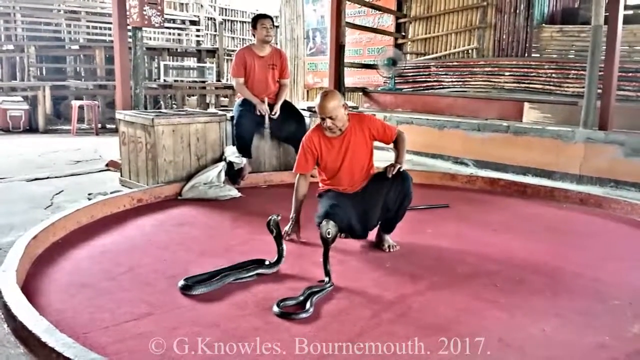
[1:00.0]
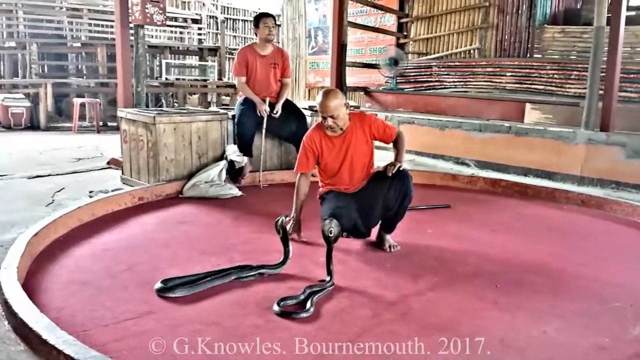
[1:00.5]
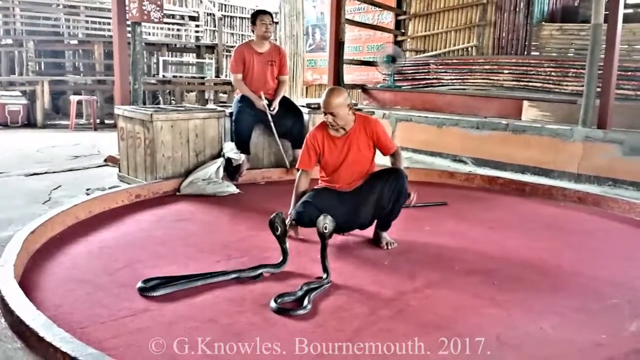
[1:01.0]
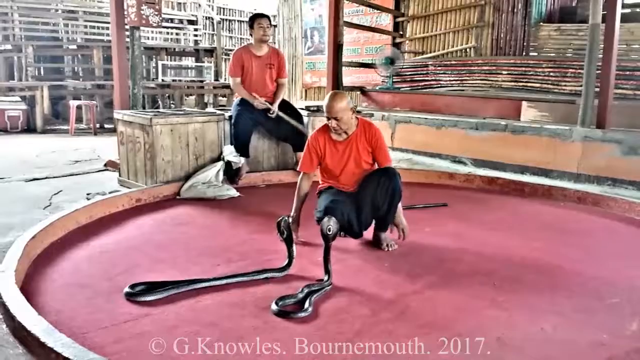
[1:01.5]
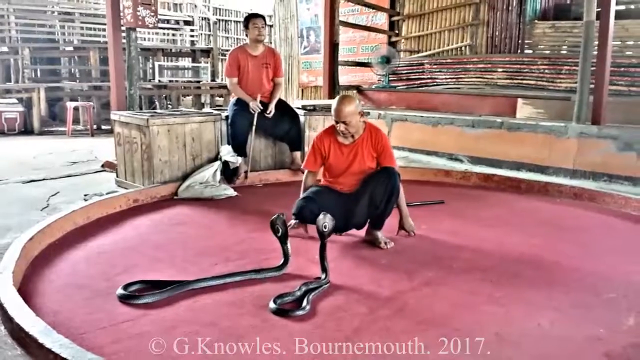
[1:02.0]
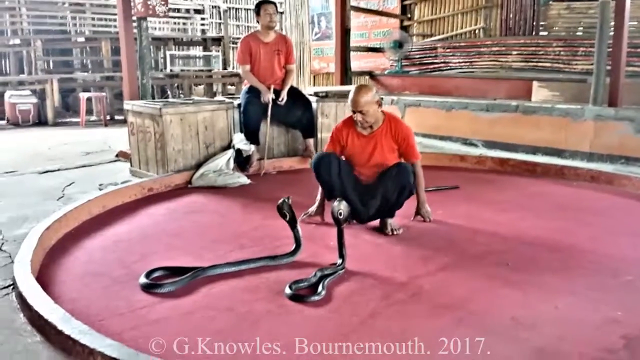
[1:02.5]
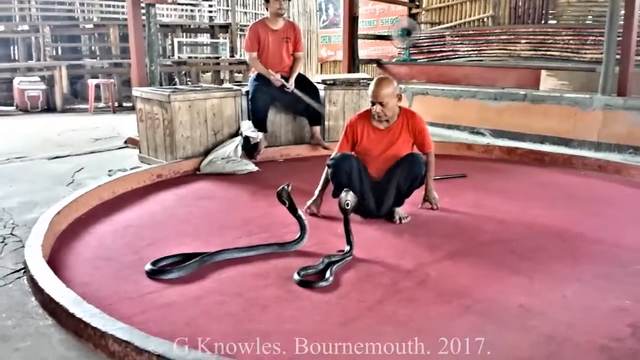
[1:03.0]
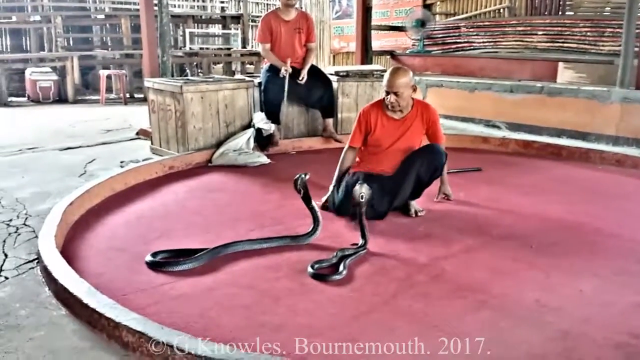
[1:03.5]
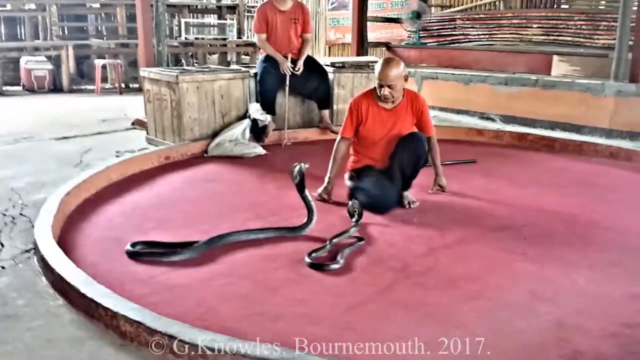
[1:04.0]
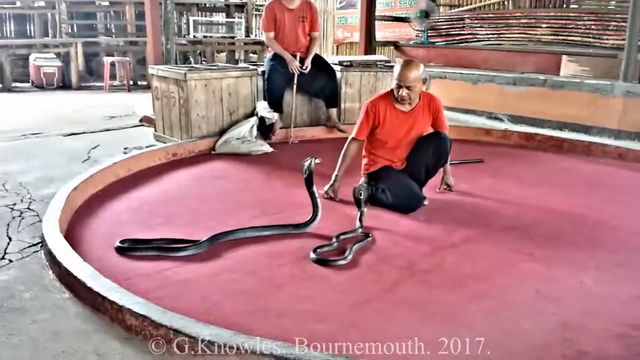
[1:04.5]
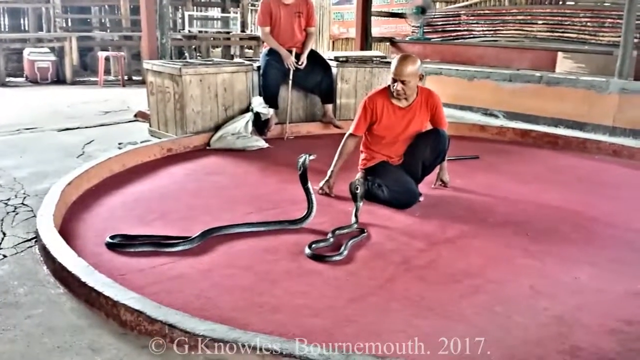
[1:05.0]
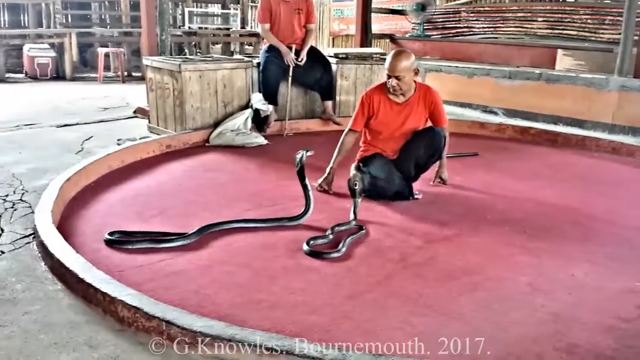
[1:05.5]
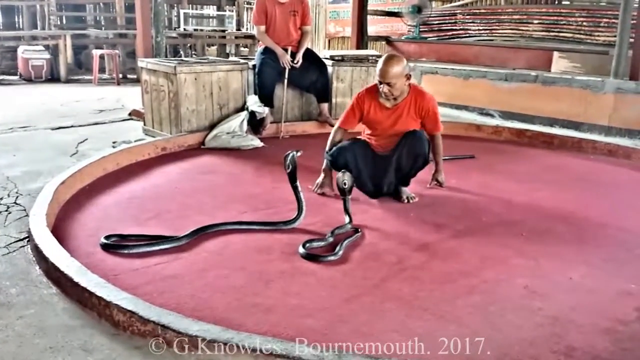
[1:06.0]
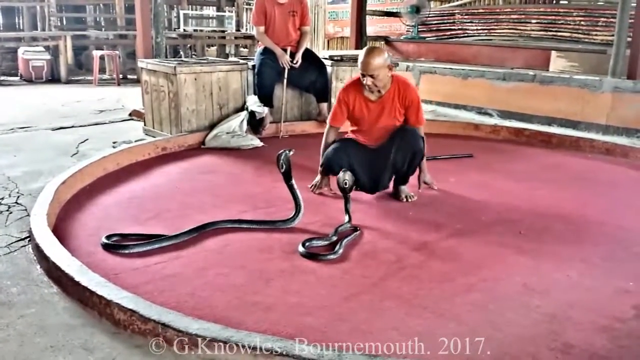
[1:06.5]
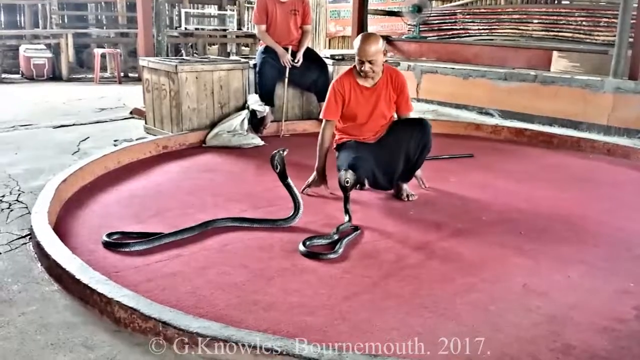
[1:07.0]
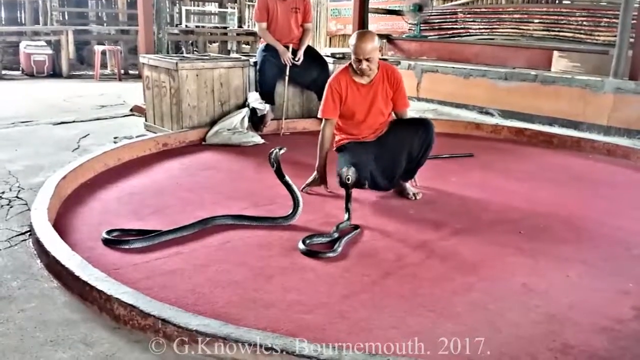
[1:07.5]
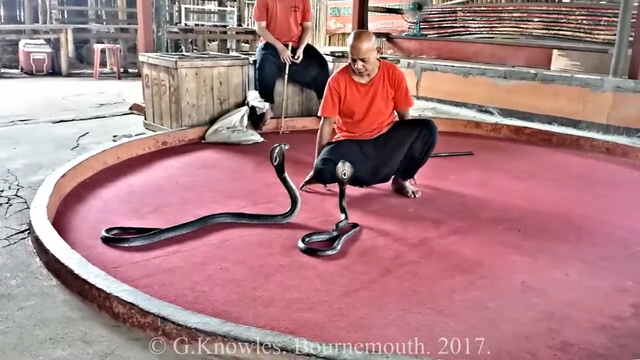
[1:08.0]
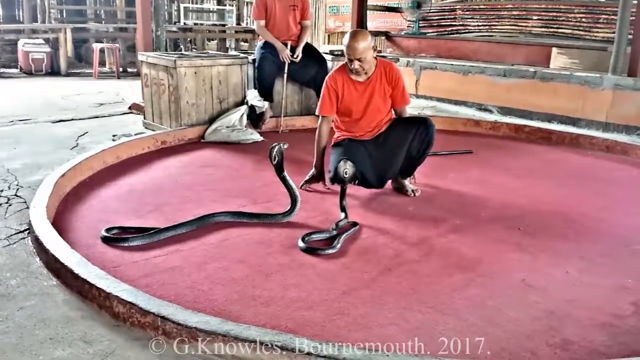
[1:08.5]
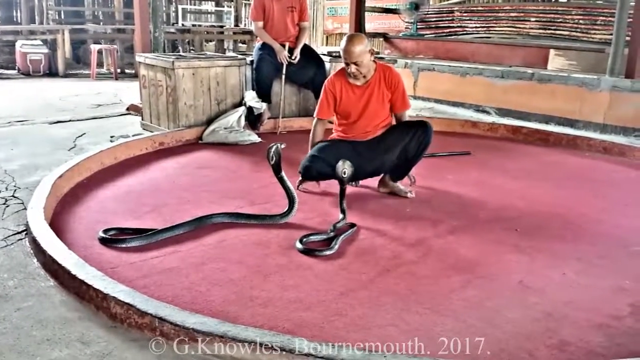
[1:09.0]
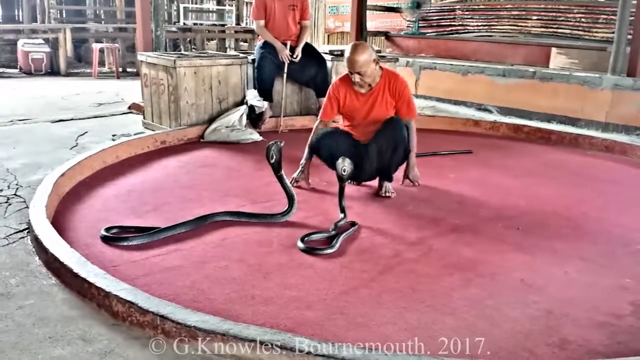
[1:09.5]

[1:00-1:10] The two men are in the pink arena. The snake on the left is stretched out, watching the knee of the squatting man as he moves his knee to attract its attention. He appears to be trying to get the left snake's attention, sort of mimicking the way a snake moves with his knee. The man in the background with the hook is sort of staring off into the distance, not really paying attention to the man in front, and is waving the hook around. The man in front is bald and not wearing shoes. The man in the back has short black hair.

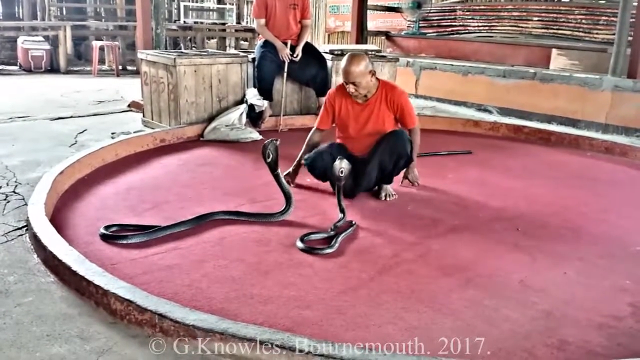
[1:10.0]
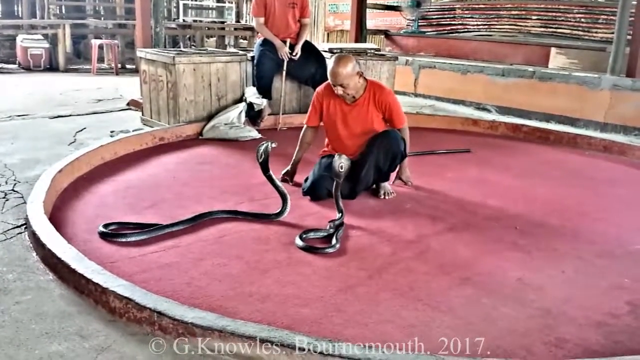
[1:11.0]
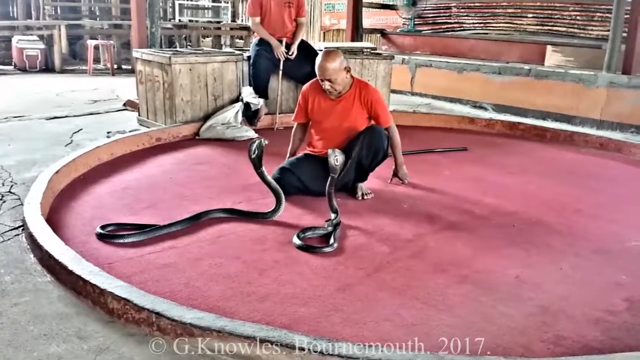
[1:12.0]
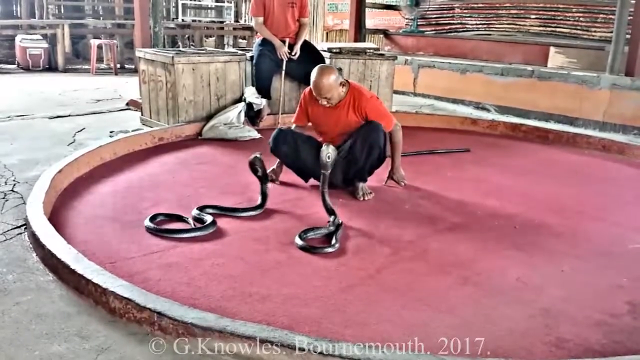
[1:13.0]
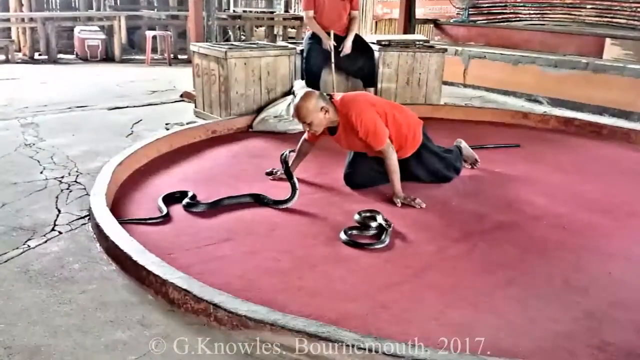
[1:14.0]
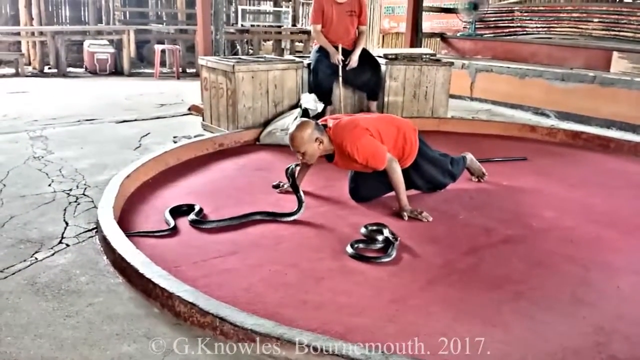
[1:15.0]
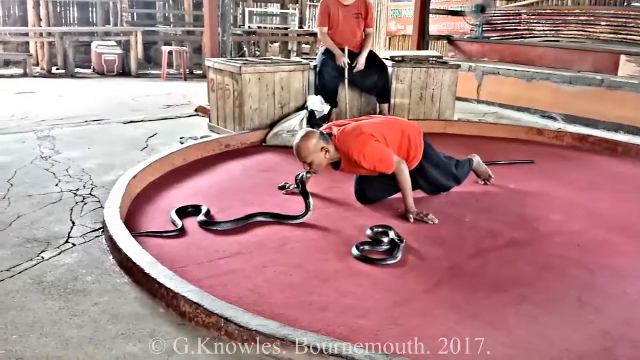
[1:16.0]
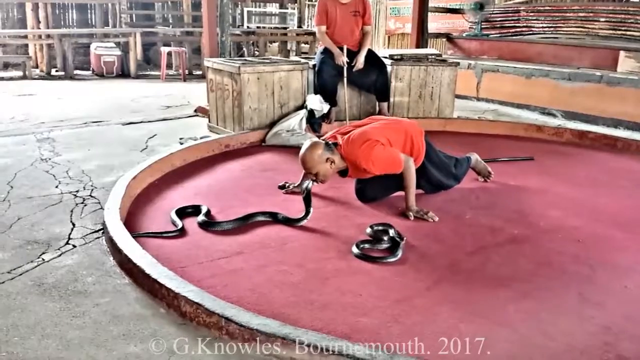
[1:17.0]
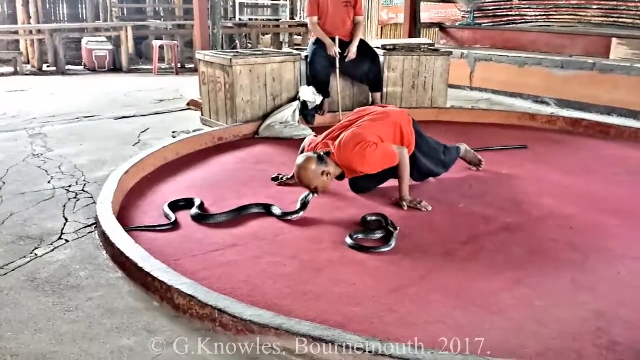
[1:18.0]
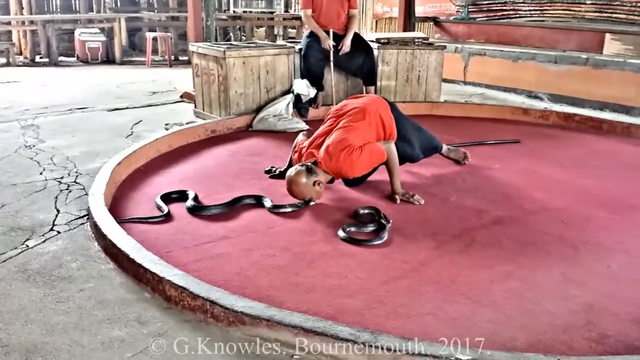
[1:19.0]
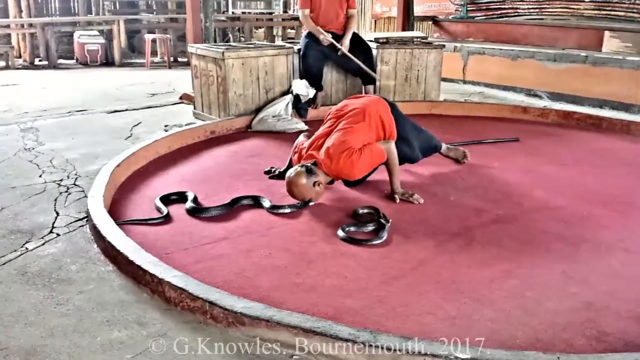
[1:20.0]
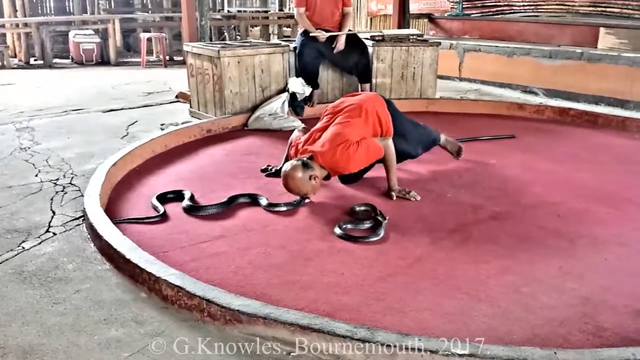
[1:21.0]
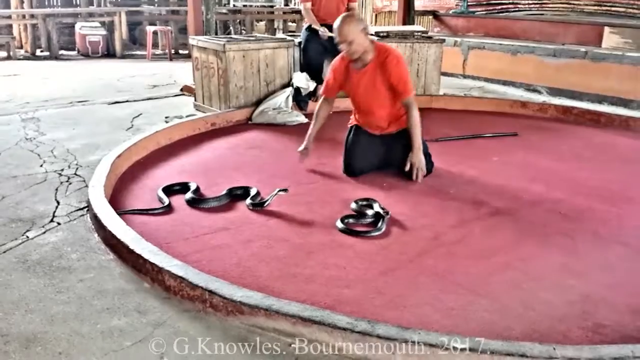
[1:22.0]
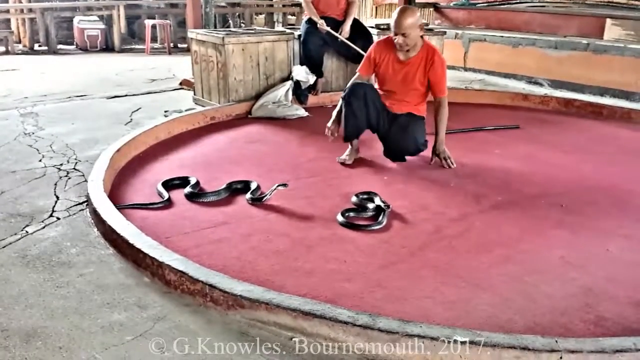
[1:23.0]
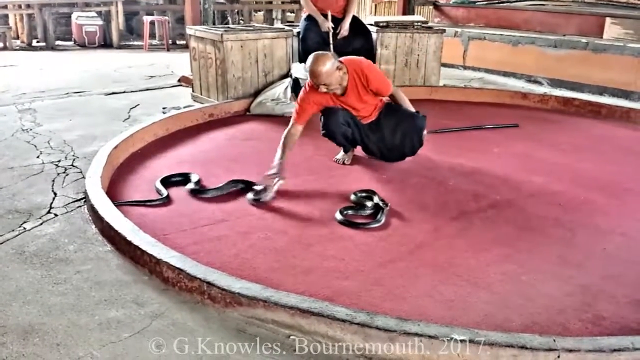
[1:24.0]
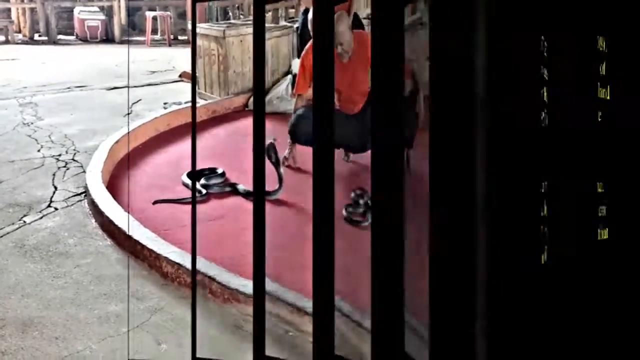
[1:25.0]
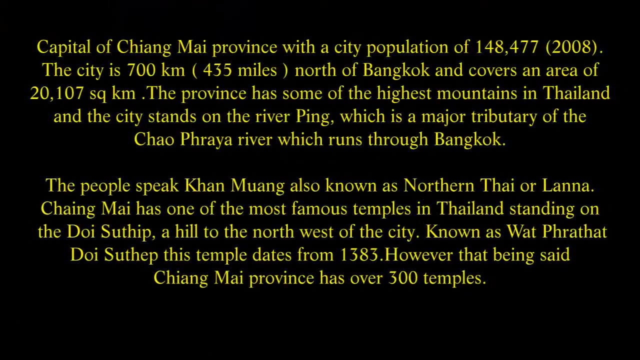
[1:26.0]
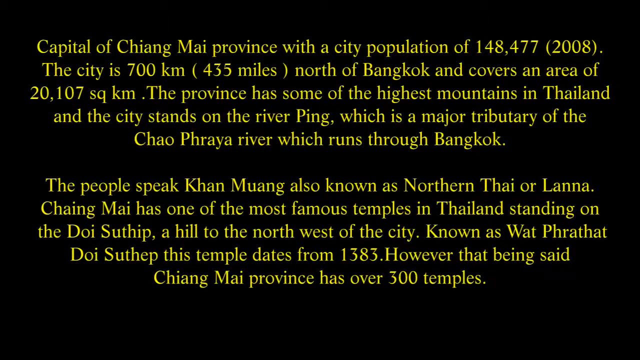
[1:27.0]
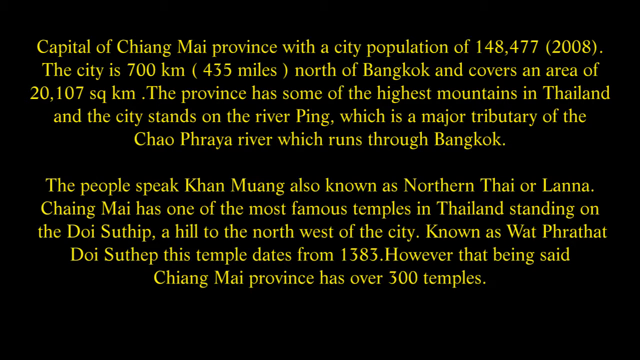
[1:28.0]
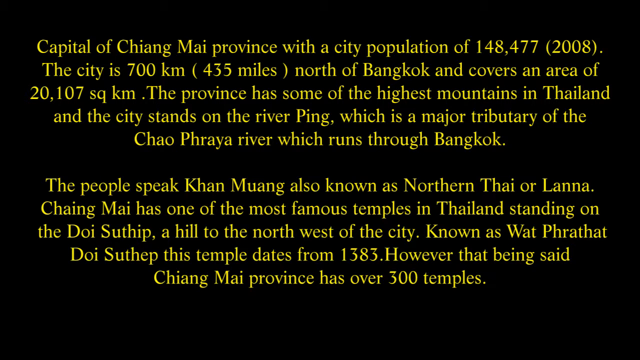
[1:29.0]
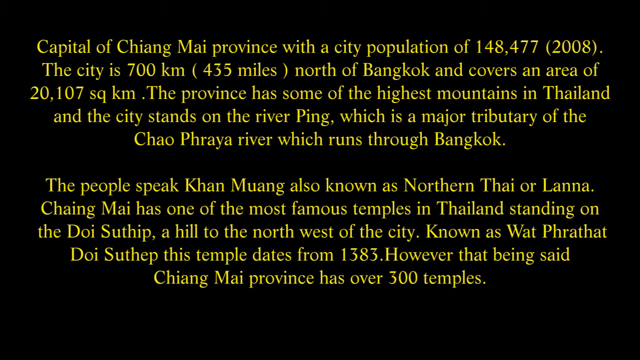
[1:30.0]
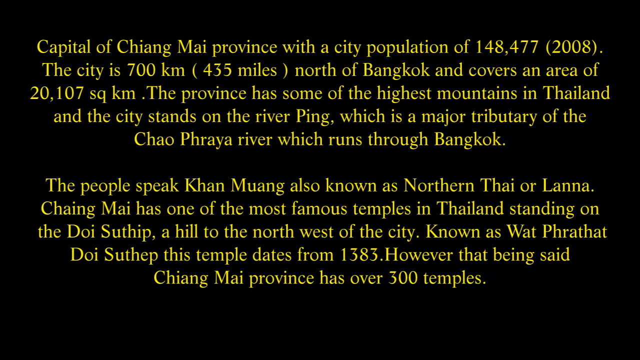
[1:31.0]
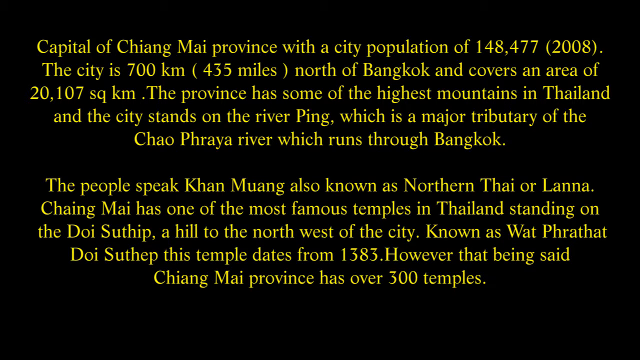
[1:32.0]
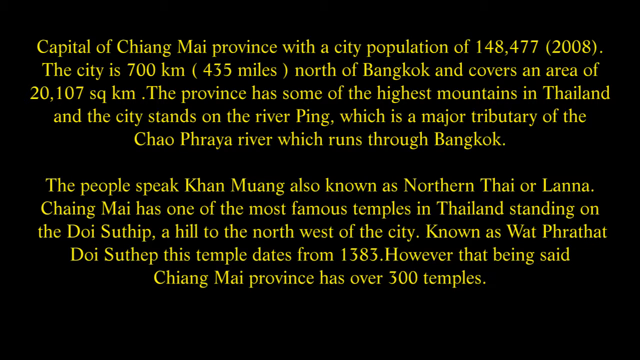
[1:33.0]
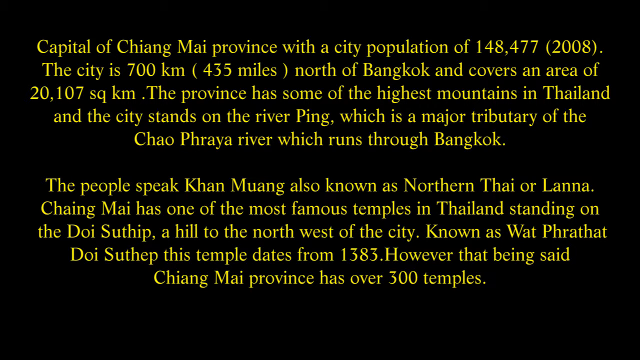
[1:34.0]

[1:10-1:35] The man tries to attract the attention of the stretched-out snake on the left using his knee. The snake tries to lunge at his knee, but he moves away in time. He then kisses the head of the snake and tries to put the snake's head to the ground with his head. The snake on the right is all coiled up and not paying attention to him. He then hits the snake to get its attention again. The video then changes to a text screen that says "Capital of Chiang Mai Province with a city population of 148,477 in 2008," followed by more text about the city, some of its features, the language spoken, prominent landmarks, and other information. The same still frame of yellow text on a black background remains until the video ends.